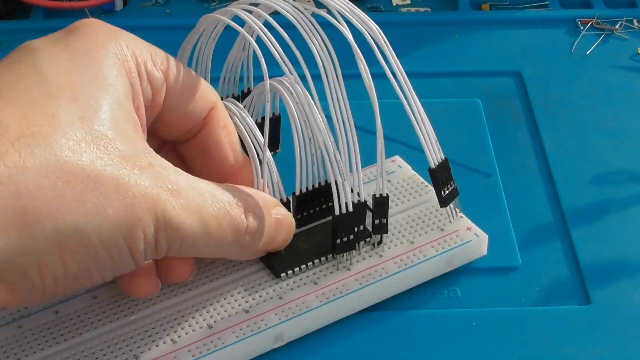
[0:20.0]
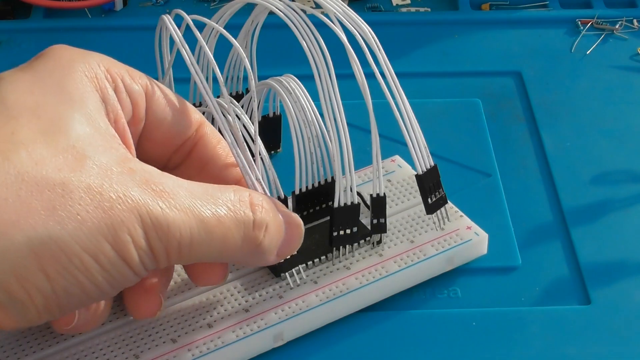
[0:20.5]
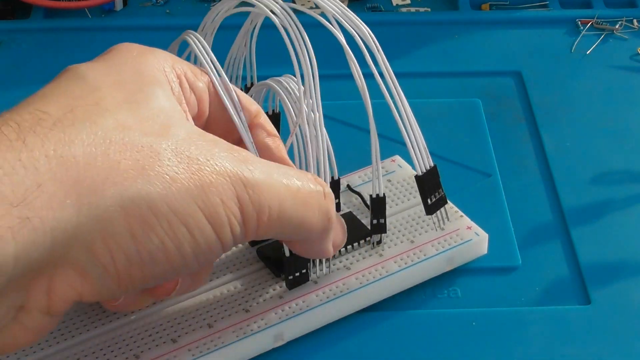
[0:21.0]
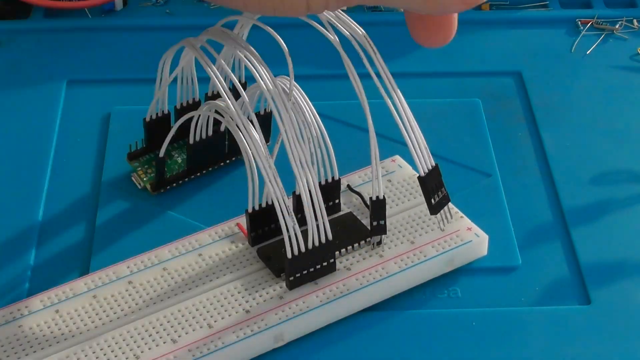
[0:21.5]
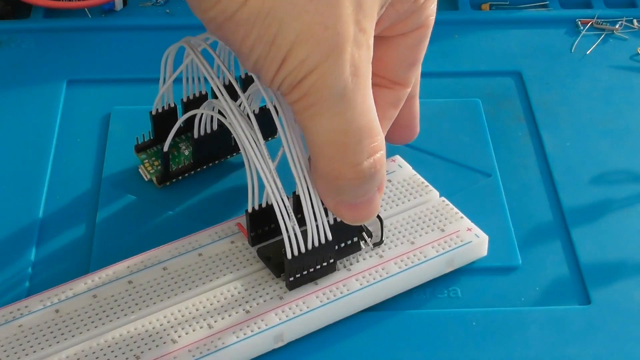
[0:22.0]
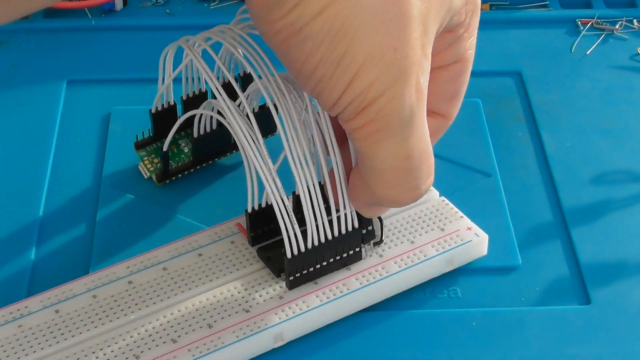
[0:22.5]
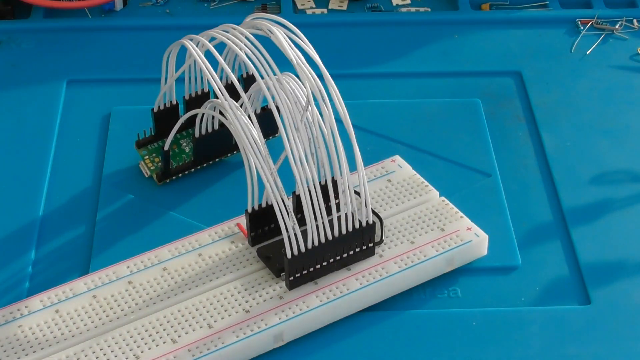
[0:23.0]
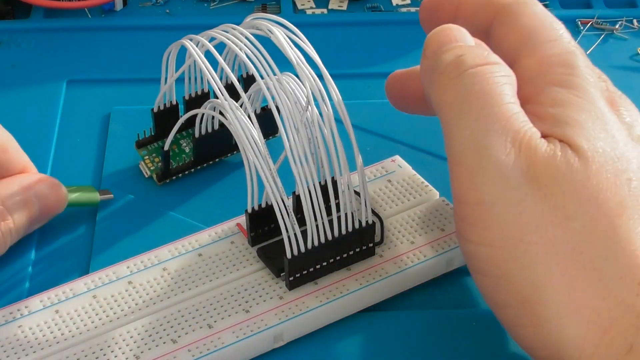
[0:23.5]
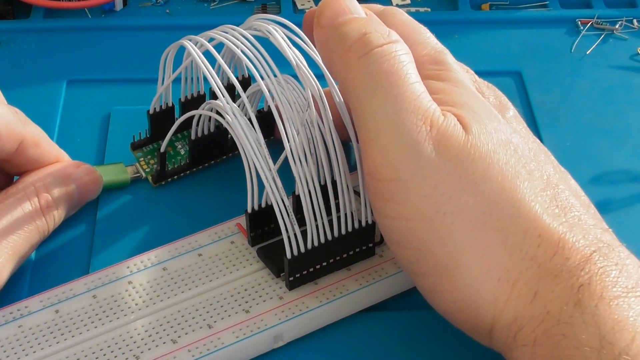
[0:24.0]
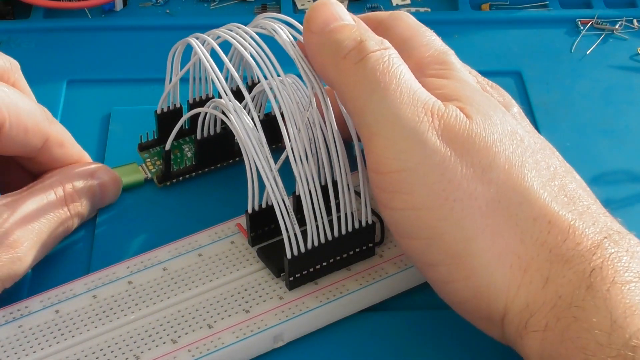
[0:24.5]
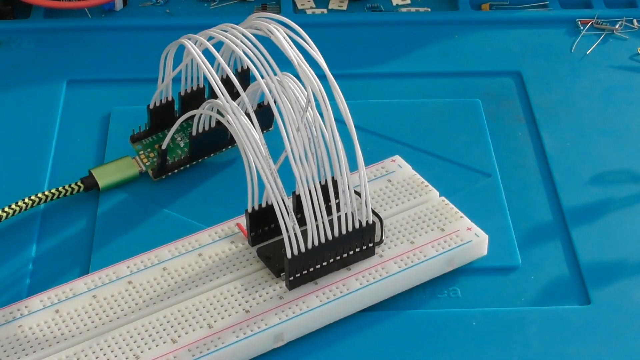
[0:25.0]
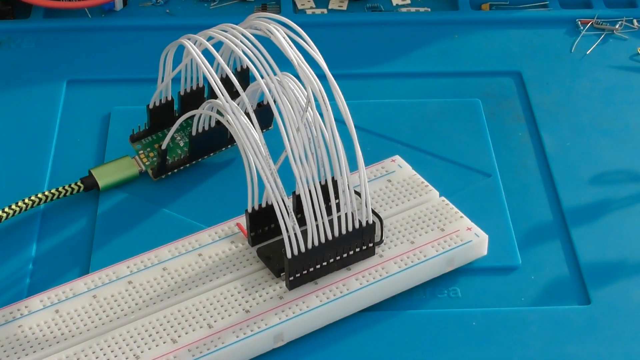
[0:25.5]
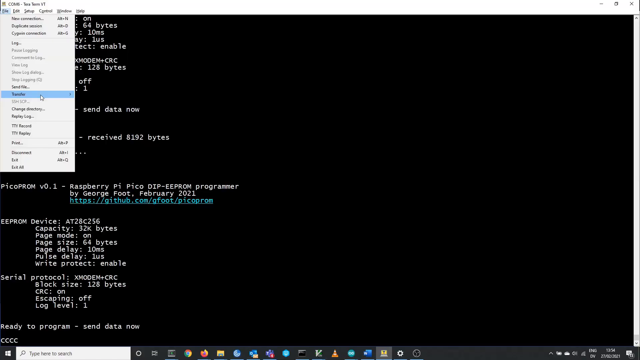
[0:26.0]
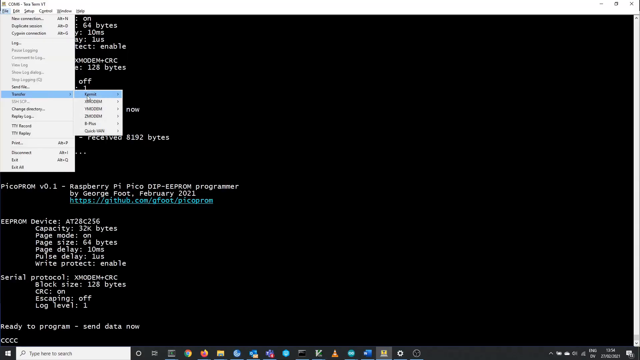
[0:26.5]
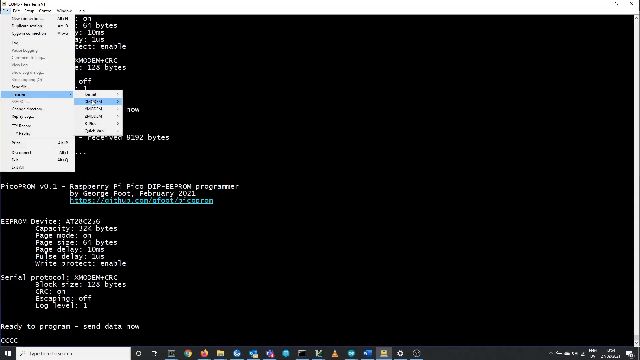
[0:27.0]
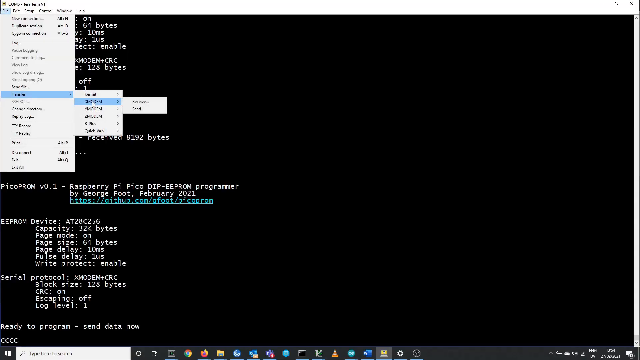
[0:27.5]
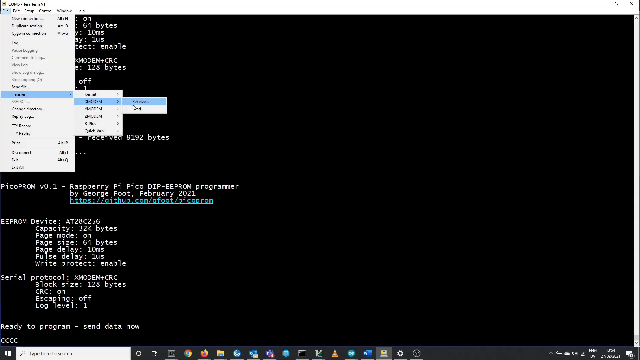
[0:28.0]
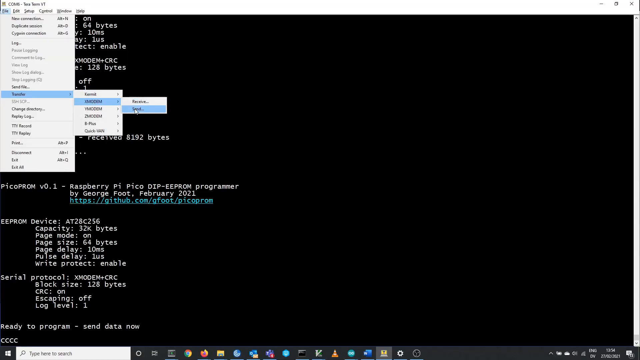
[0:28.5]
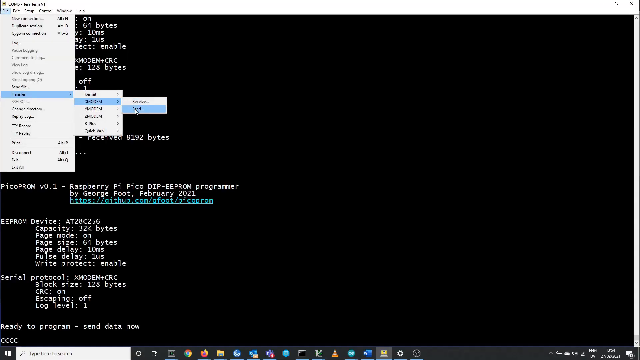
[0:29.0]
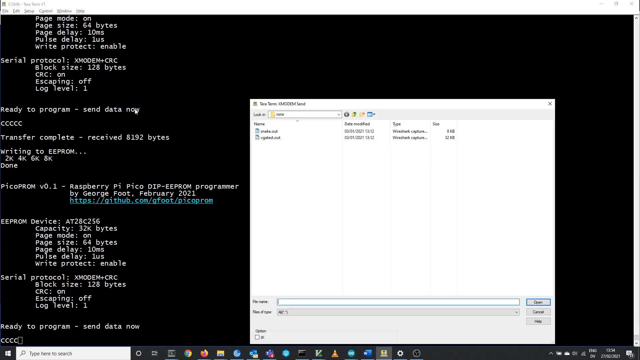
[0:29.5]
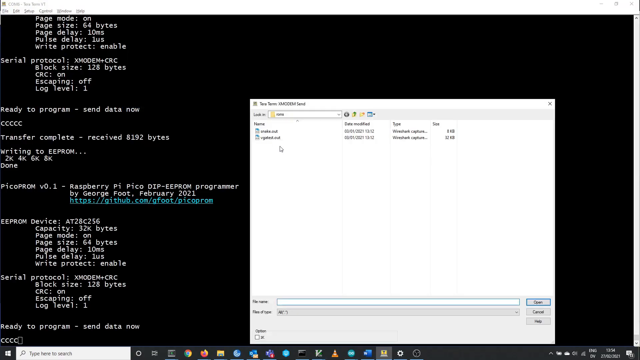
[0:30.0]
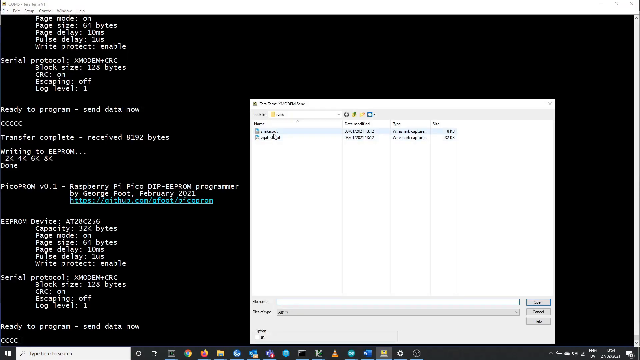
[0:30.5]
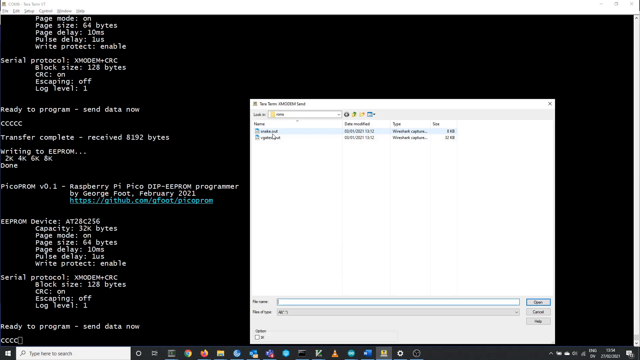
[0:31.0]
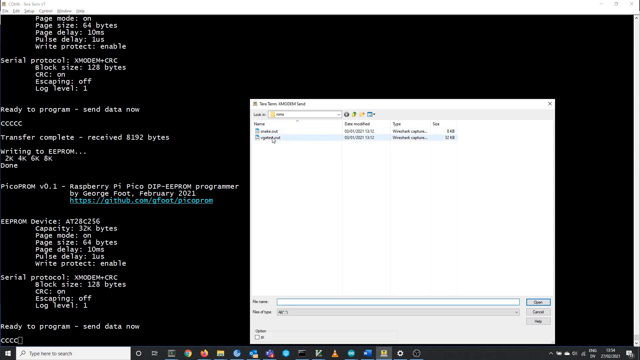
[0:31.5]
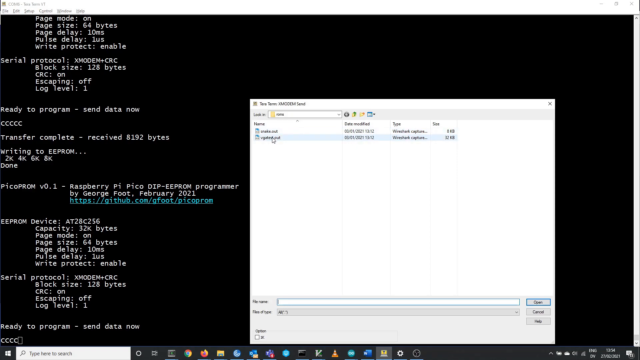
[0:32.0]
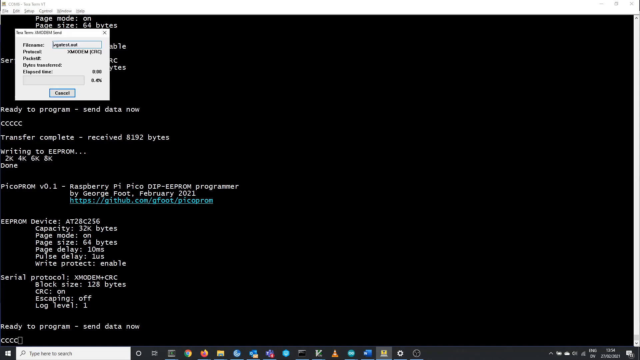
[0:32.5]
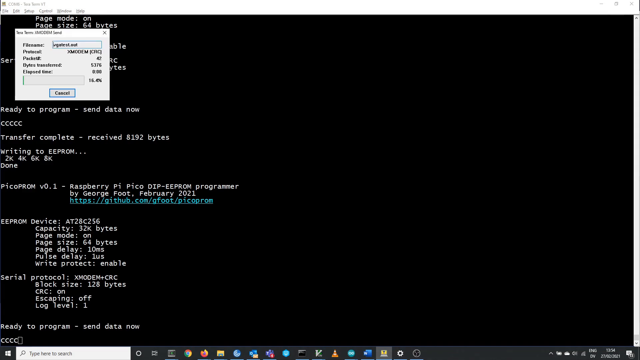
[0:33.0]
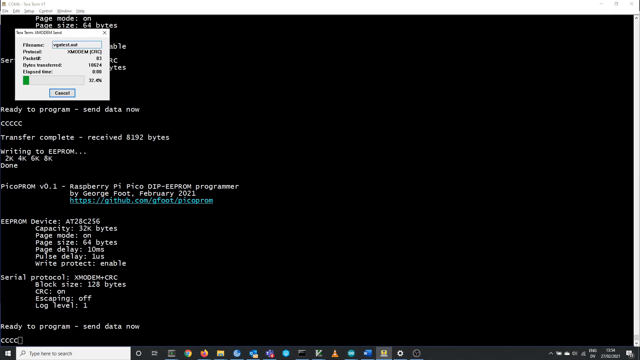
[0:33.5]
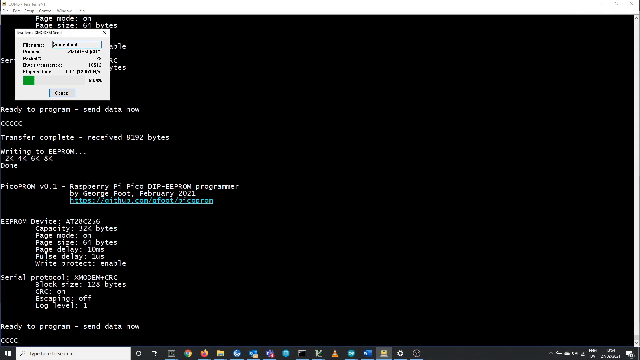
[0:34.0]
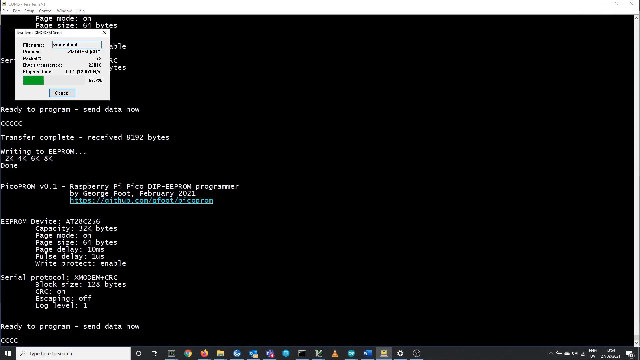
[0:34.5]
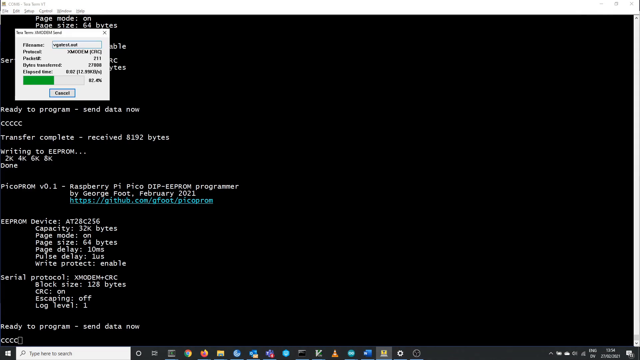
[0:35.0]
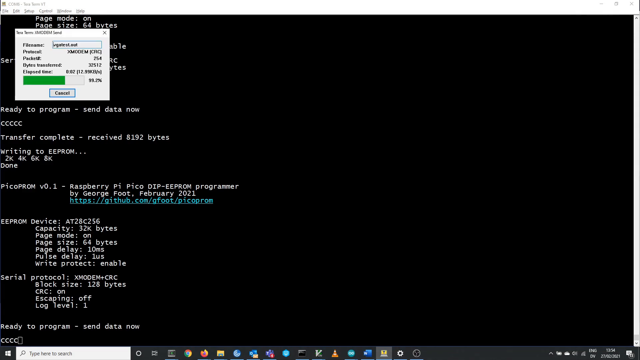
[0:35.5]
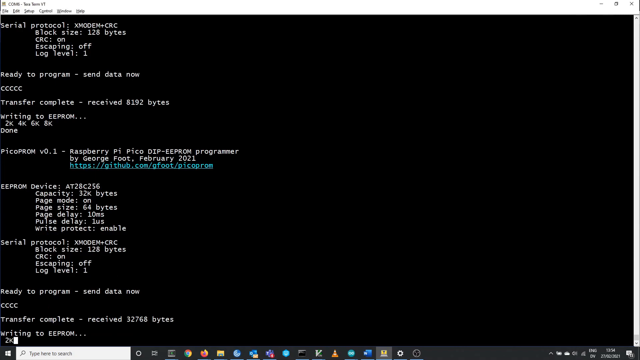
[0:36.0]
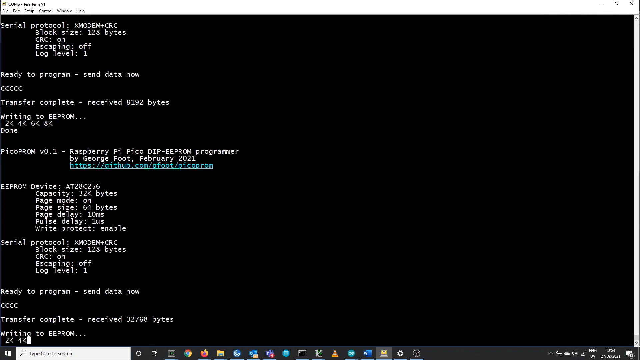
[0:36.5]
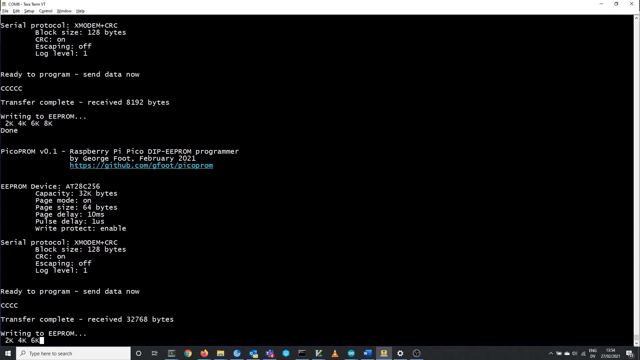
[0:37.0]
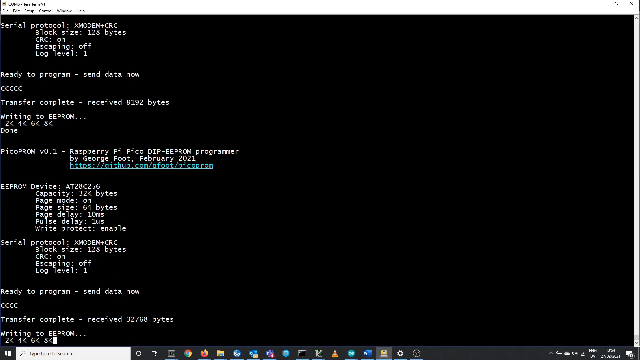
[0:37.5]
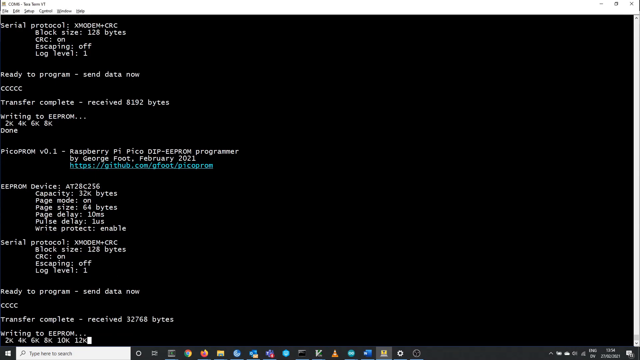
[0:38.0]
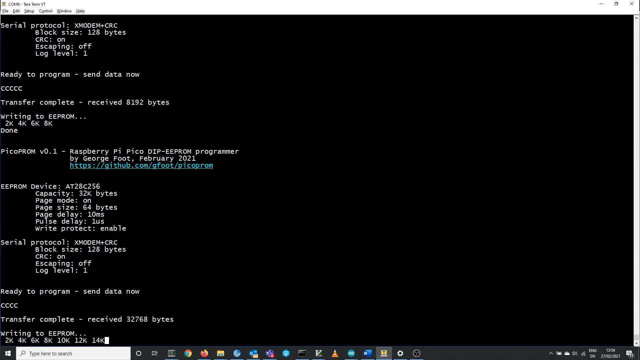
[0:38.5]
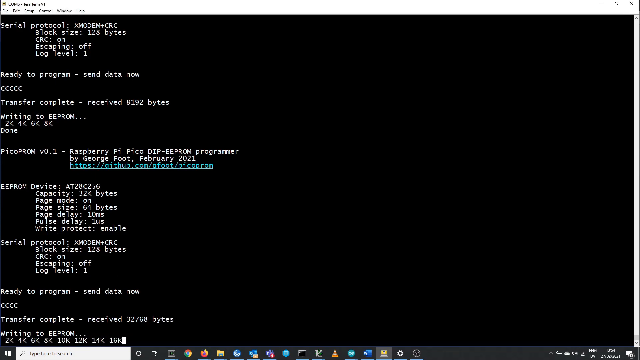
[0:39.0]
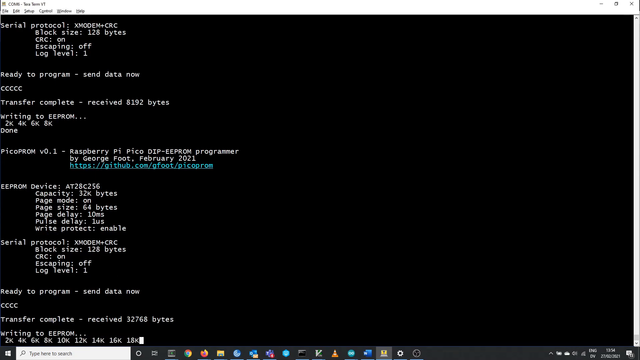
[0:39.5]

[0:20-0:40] A man's hand is visible as some coding is done on a computer. Something is pressed, apparently a code, and the screen starts showing words as something records. A green part indicates that information is being downloaded, apparently copied from one device to another. The download then finishes.